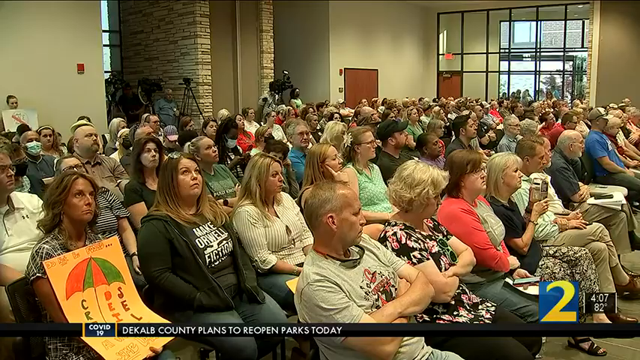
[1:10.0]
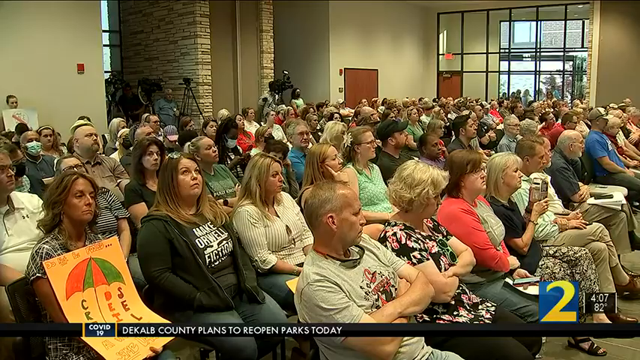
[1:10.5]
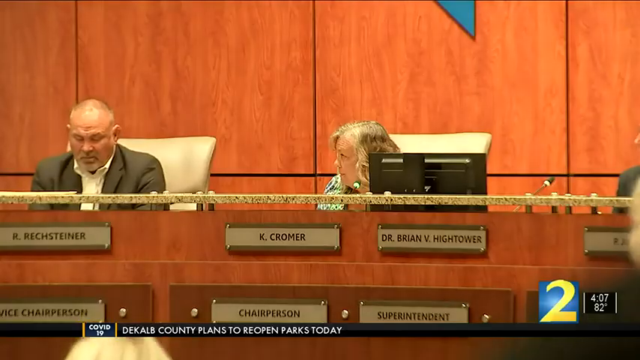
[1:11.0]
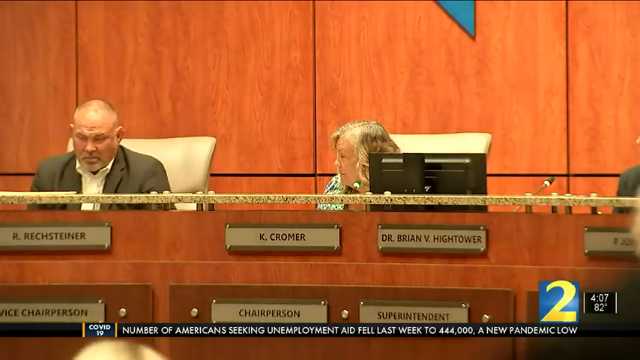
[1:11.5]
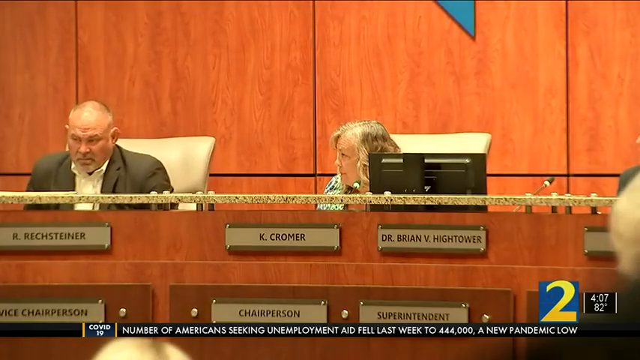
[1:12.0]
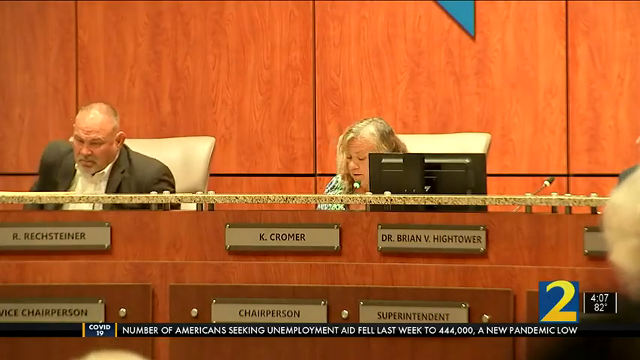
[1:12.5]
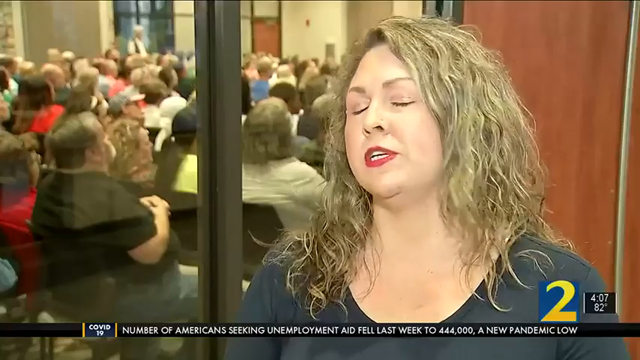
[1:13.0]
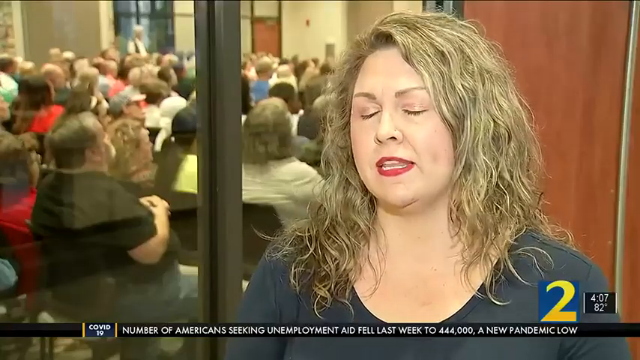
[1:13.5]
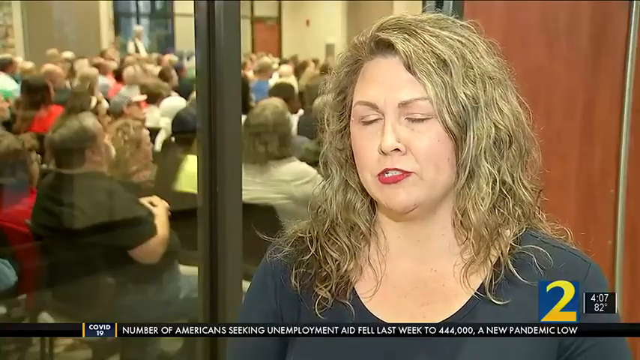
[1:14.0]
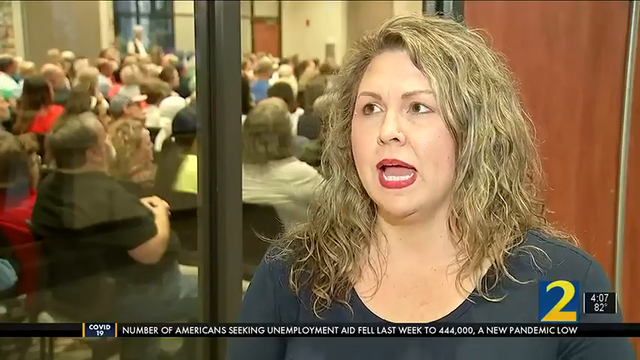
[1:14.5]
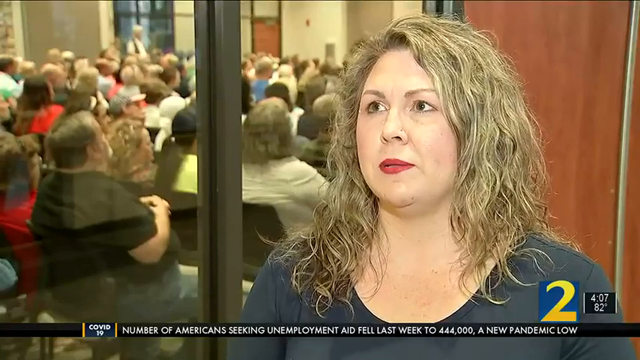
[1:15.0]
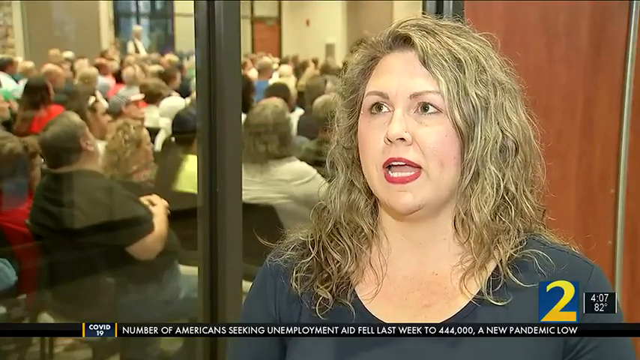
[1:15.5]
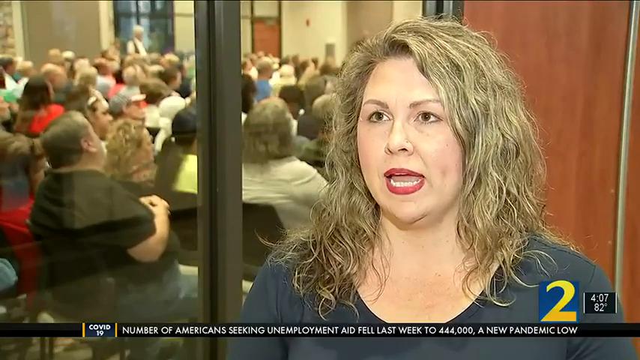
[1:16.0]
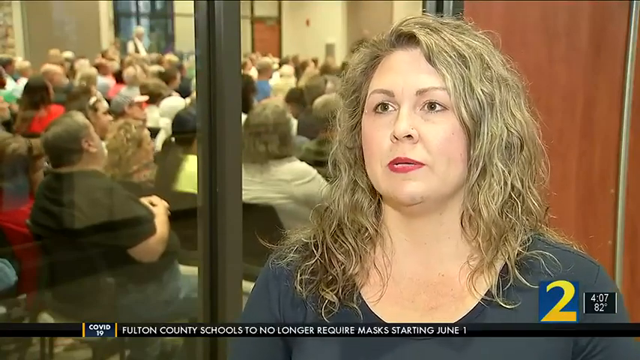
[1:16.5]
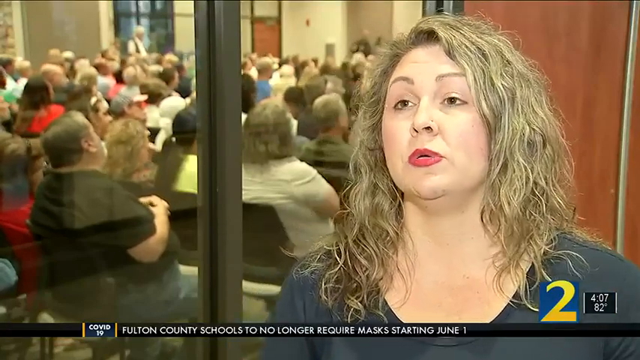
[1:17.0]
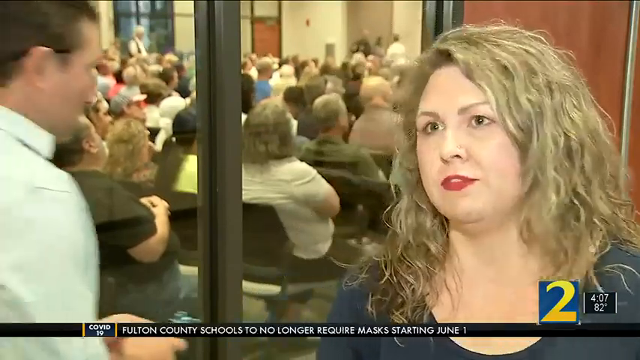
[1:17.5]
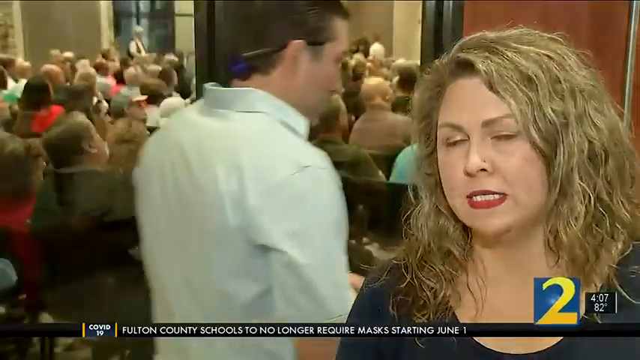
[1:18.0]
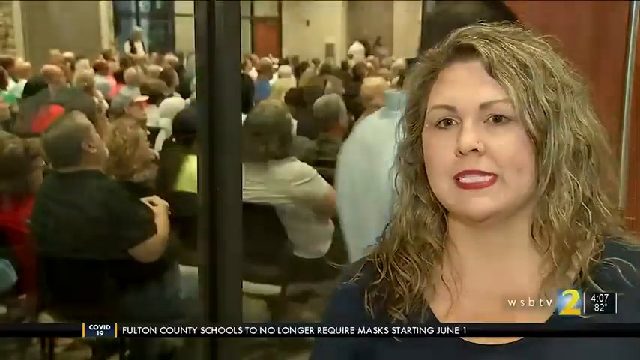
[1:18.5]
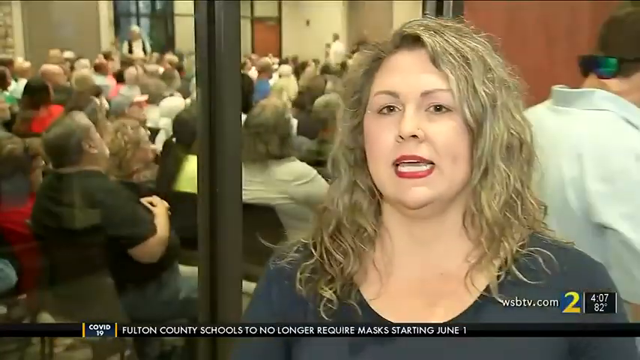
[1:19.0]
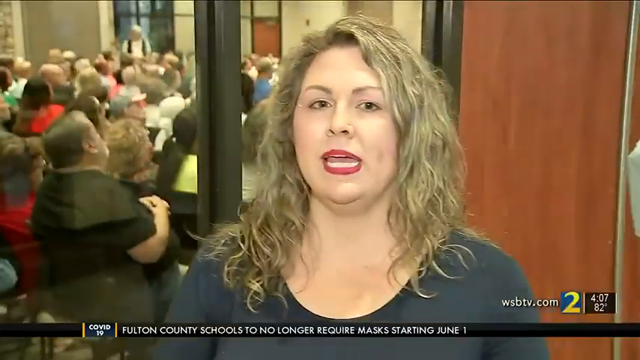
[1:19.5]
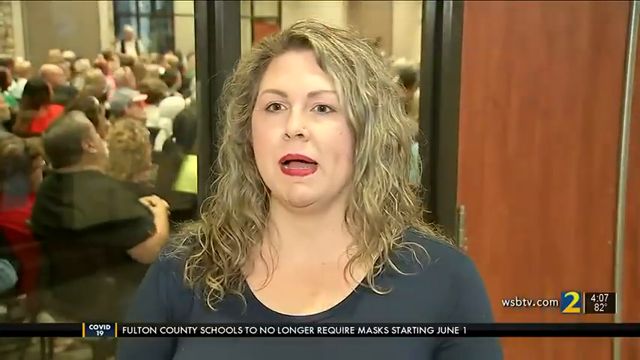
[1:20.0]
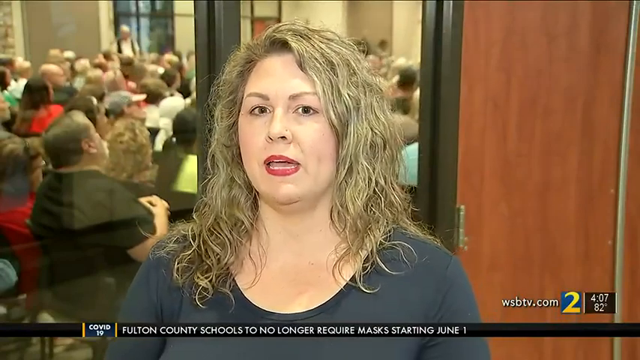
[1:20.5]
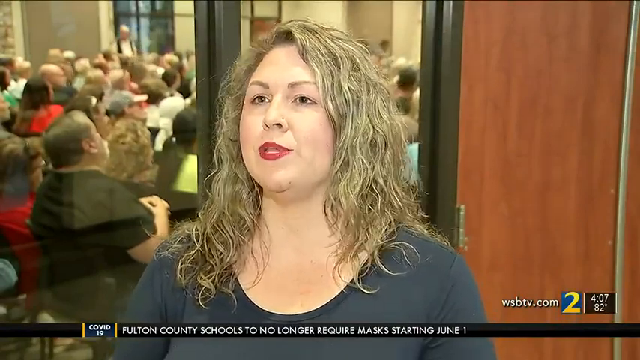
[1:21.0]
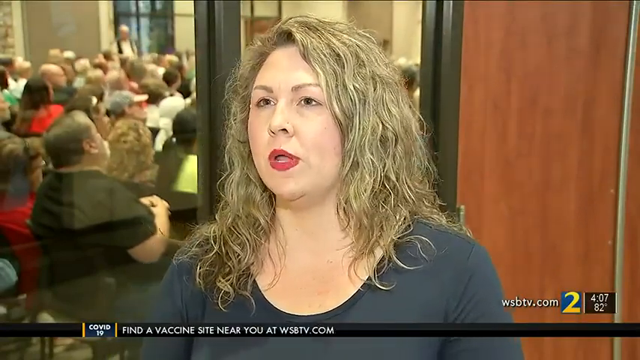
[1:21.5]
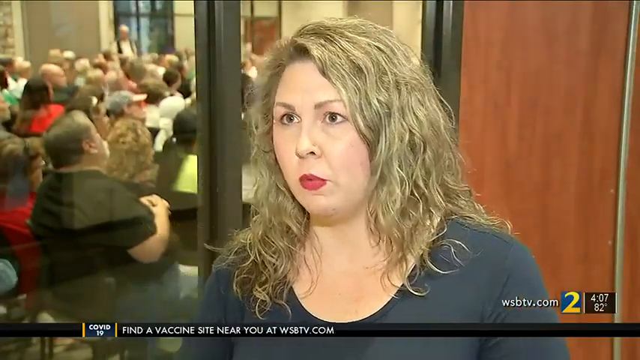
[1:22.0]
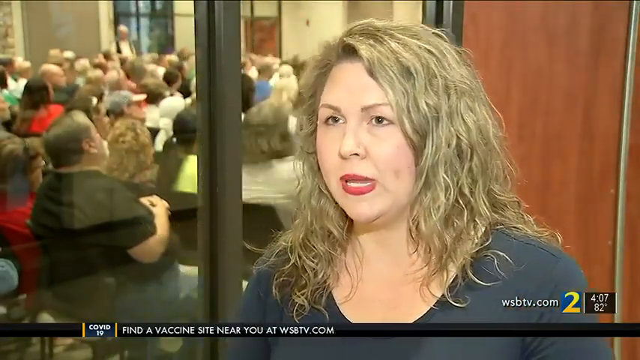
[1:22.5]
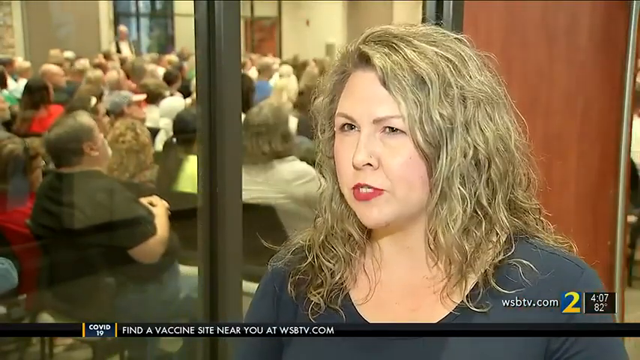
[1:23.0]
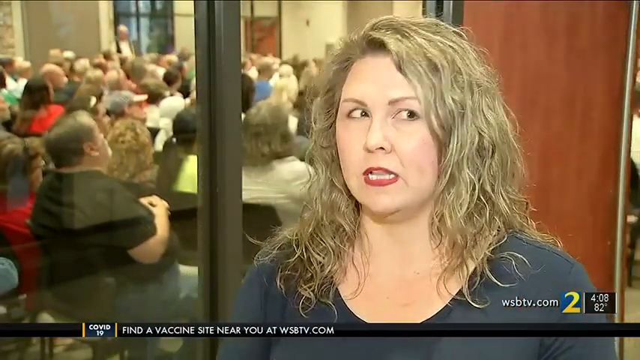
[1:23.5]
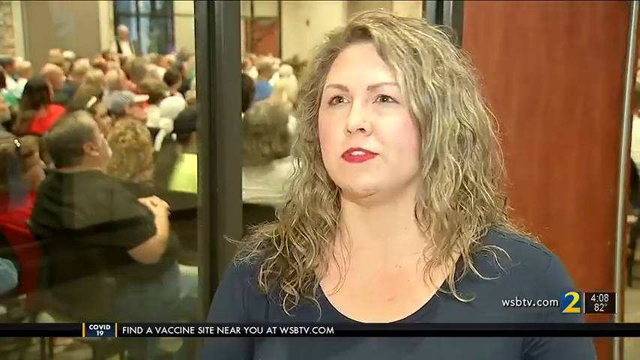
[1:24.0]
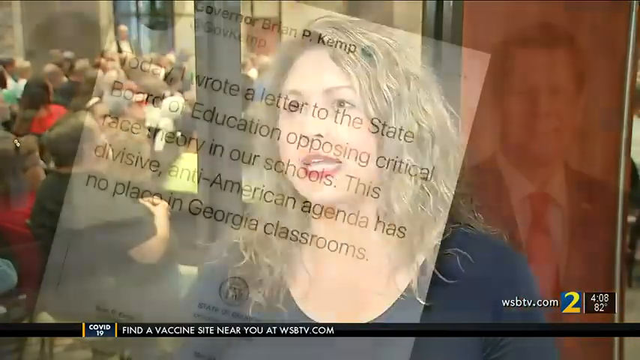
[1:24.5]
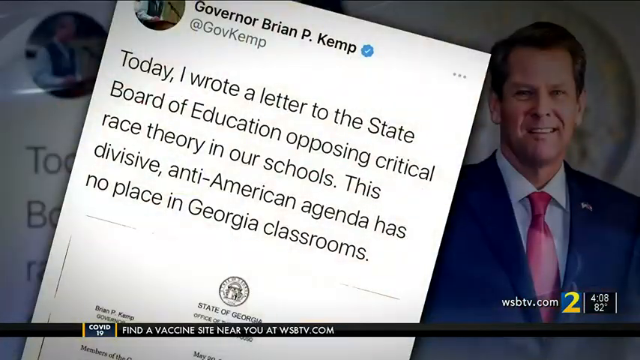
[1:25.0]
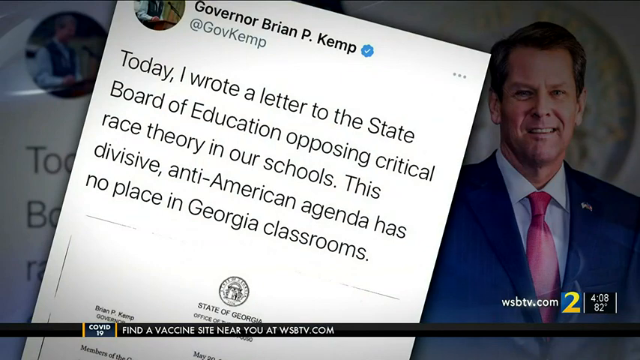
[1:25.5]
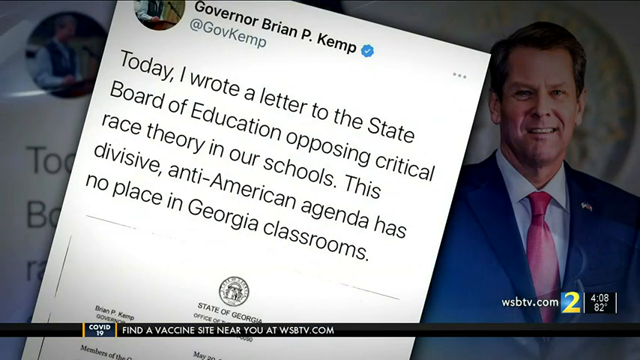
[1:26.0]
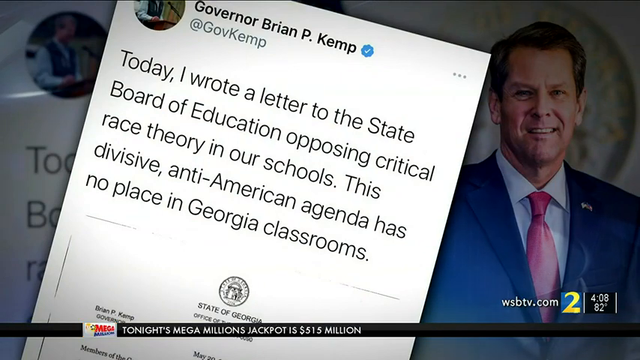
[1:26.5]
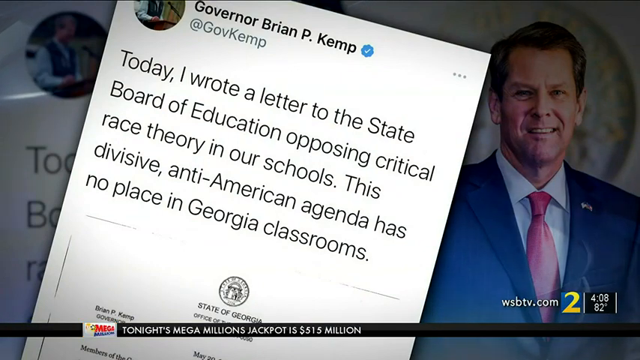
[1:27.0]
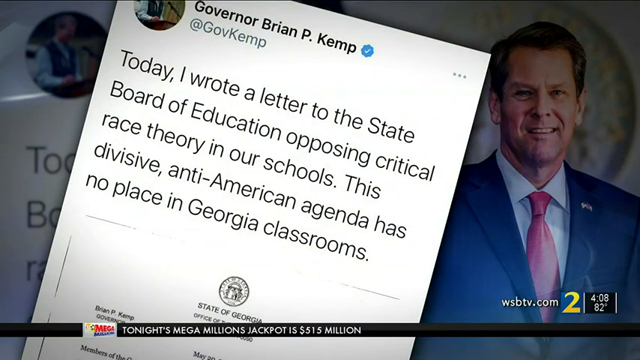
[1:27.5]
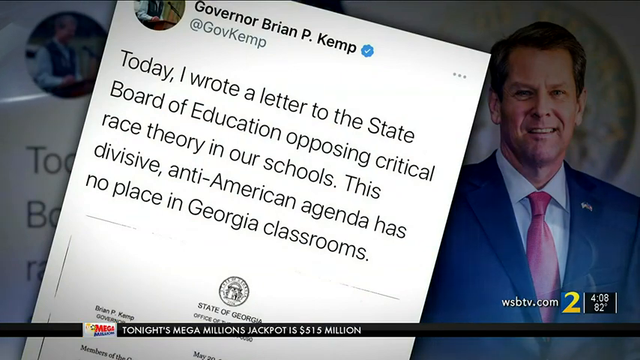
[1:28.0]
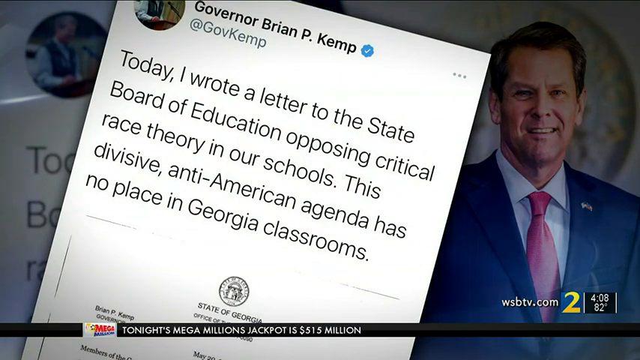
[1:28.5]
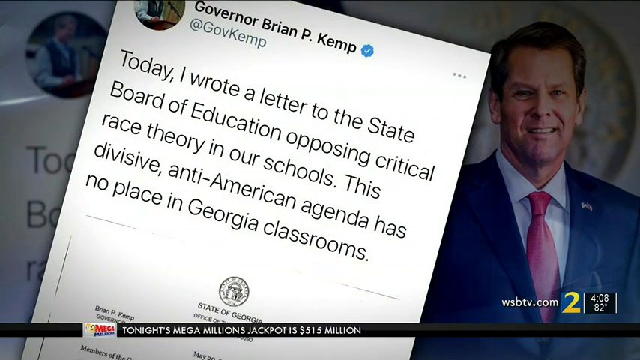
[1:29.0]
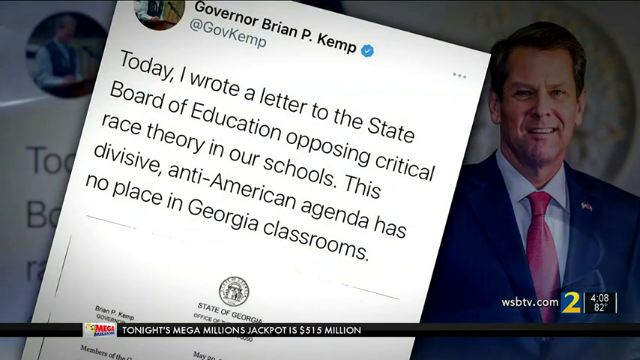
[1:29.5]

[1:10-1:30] News footage from a school board meeting carries the channel's "2" logo, and text at the bottom reads "DeKalb County plans to reopen parks today." The meeting appears to be in Georgia. The hall is packed, with rows and rows of filled seats, and someone holds signs. Many concerned parents and community members sit at the meeting. A close-up shows the board members at the desk at the front of the room, with their names on the front, such as "Dr. Brian B. Hightower" and "Kate Cromer," and their titles below: Hightower is superintendent, Cromer is chairperson, and the vice chairperson is on the other side. Another interview follows with what appears to be another parent or community member, a woman with short blonde hair who talks to the camera, apparently giving her opinion about the events.